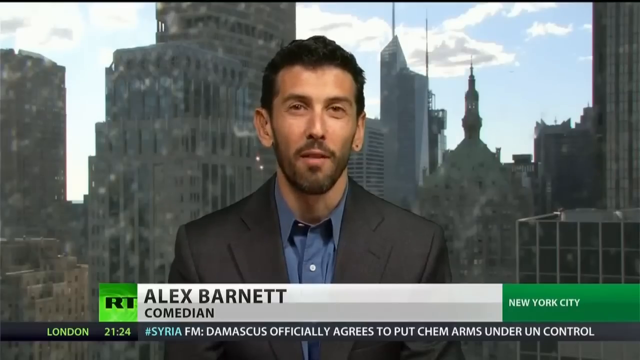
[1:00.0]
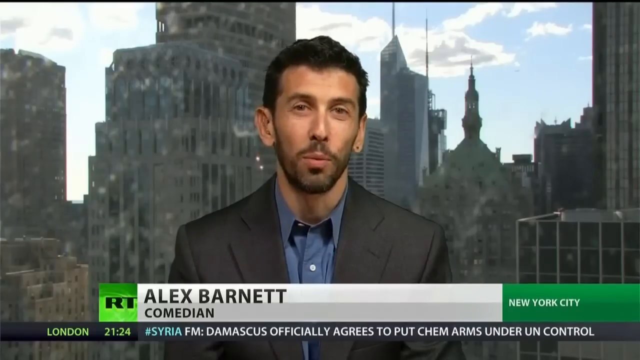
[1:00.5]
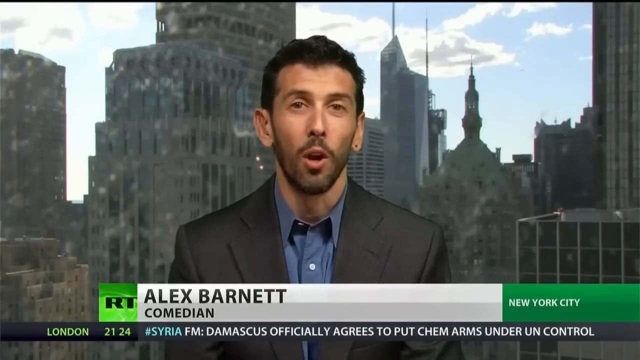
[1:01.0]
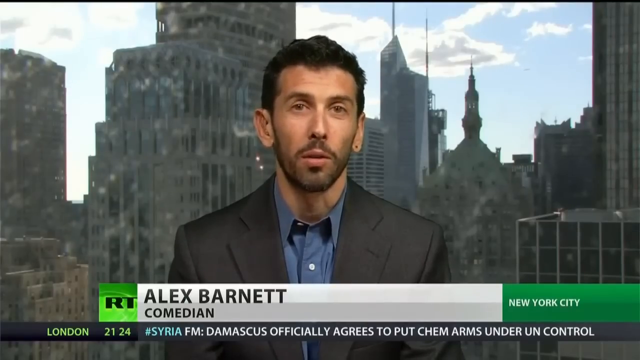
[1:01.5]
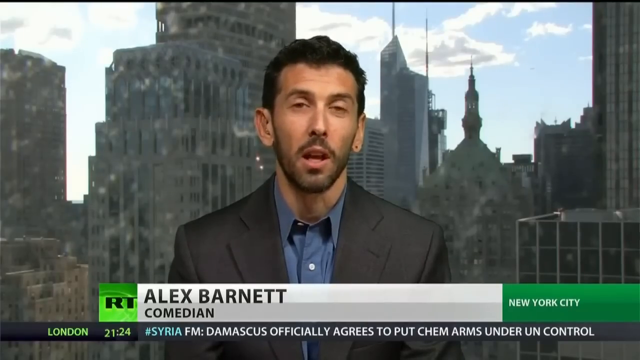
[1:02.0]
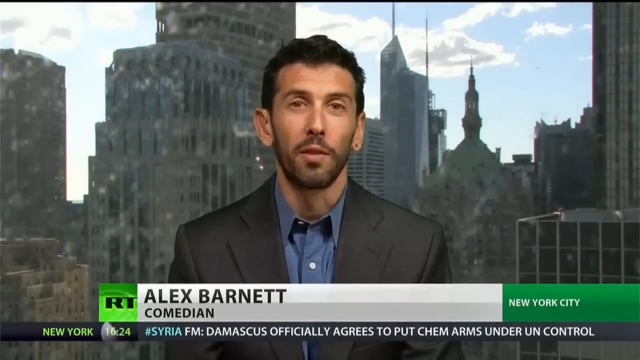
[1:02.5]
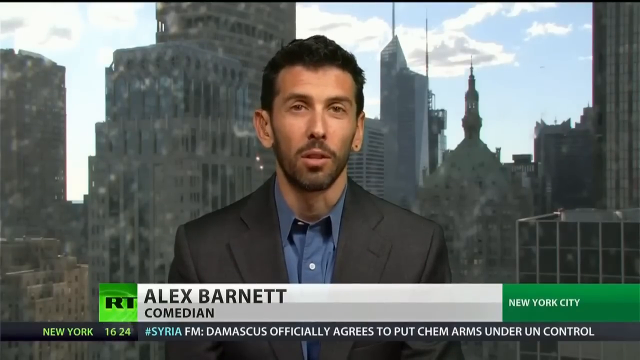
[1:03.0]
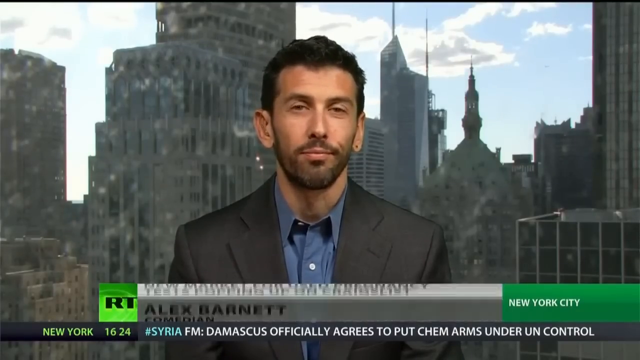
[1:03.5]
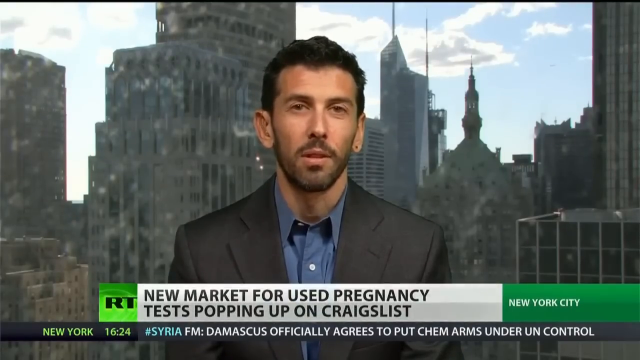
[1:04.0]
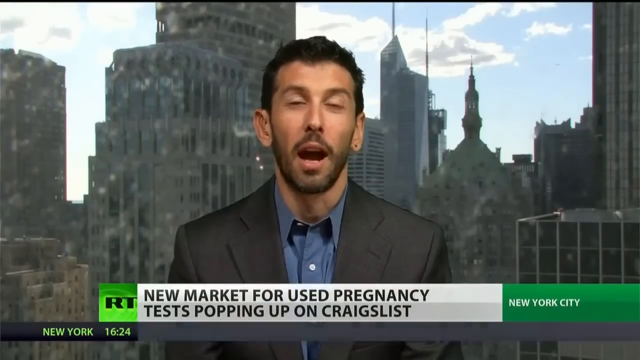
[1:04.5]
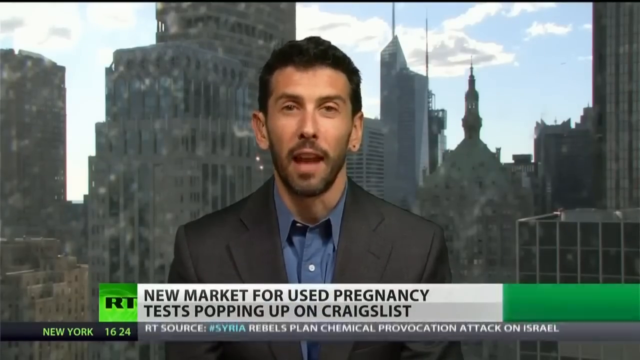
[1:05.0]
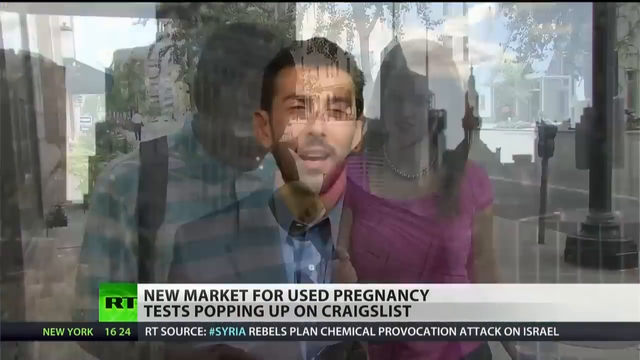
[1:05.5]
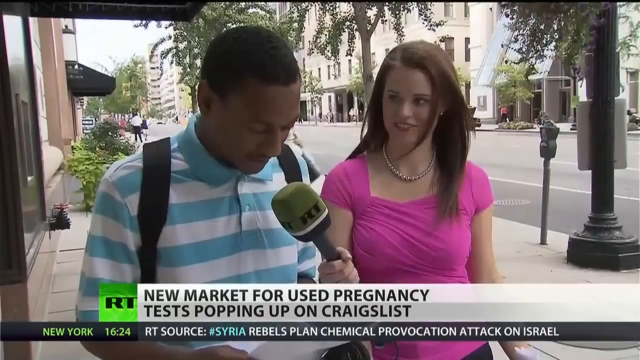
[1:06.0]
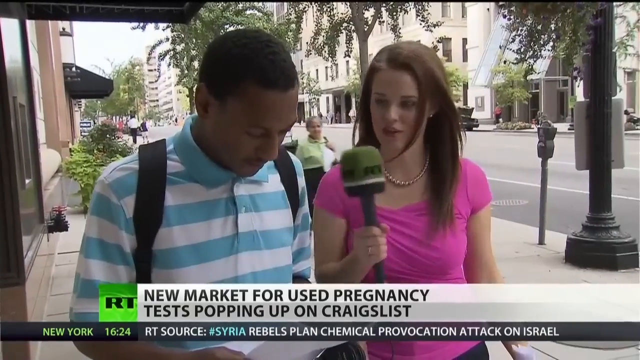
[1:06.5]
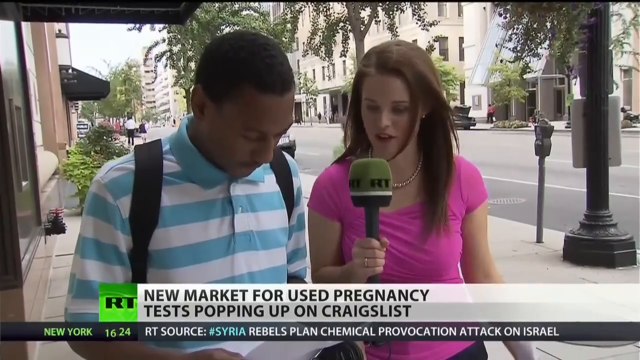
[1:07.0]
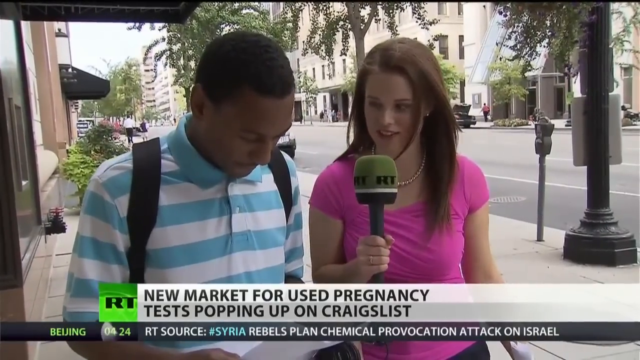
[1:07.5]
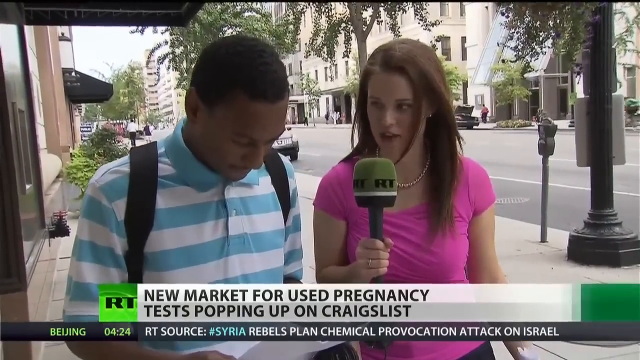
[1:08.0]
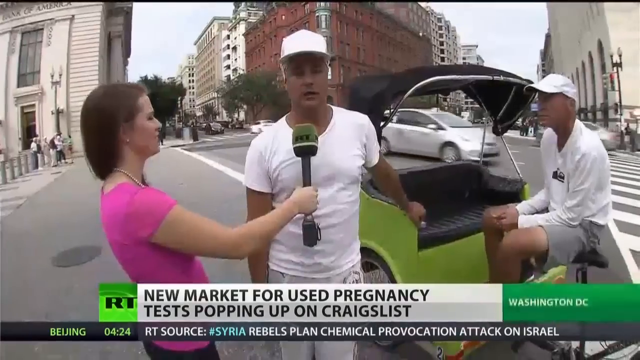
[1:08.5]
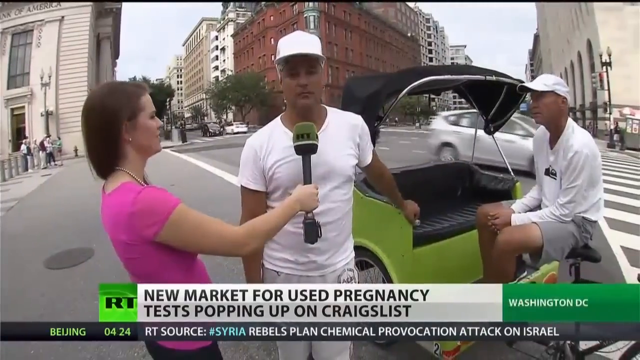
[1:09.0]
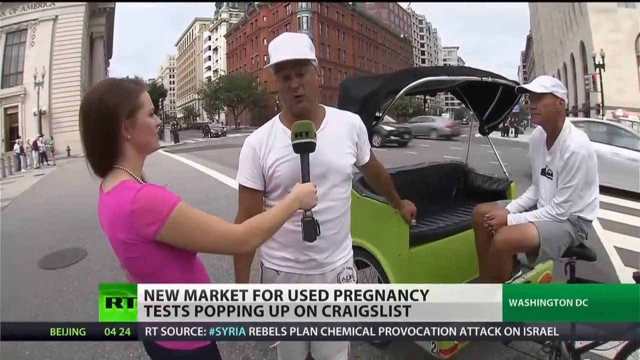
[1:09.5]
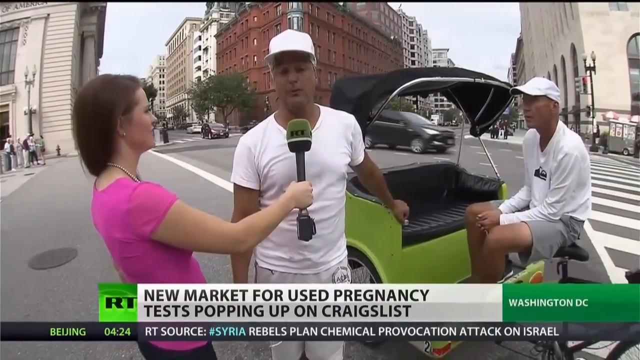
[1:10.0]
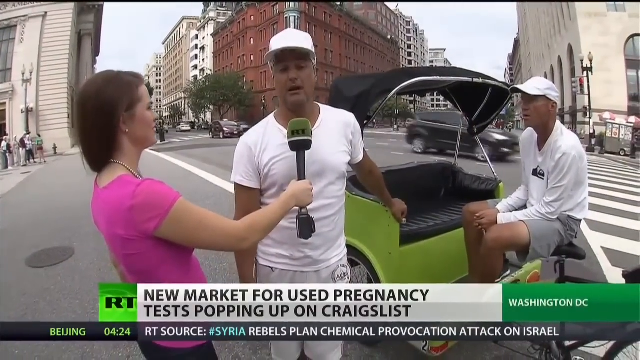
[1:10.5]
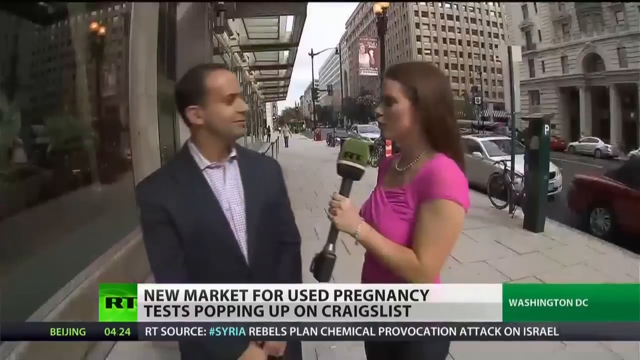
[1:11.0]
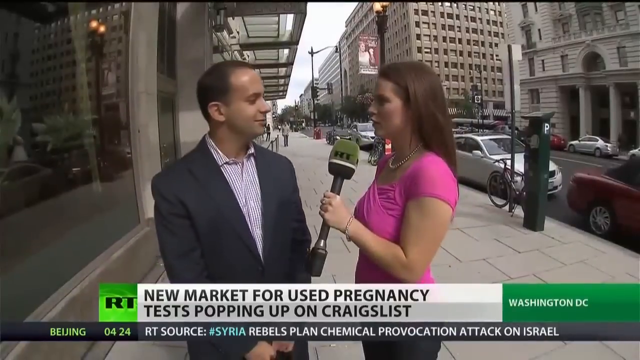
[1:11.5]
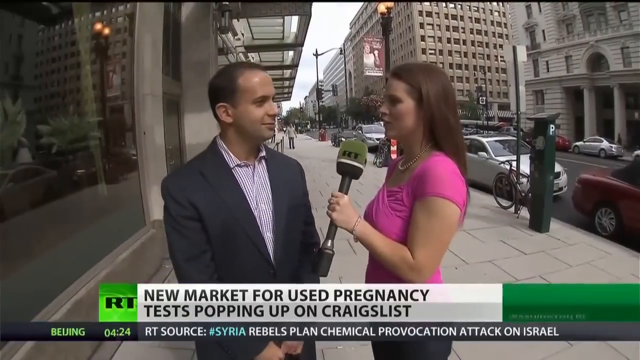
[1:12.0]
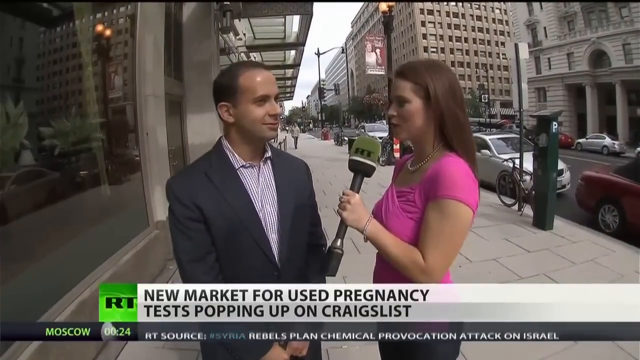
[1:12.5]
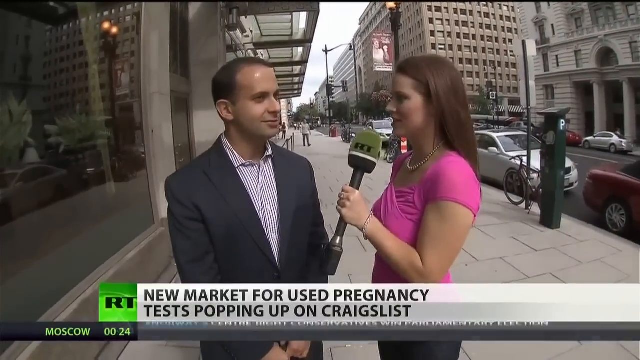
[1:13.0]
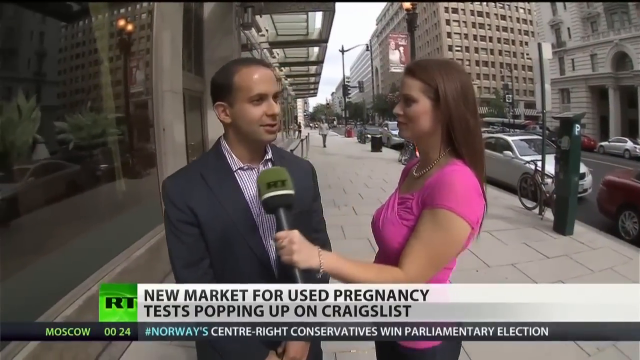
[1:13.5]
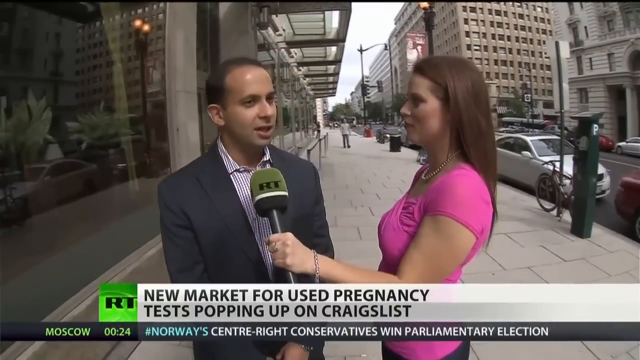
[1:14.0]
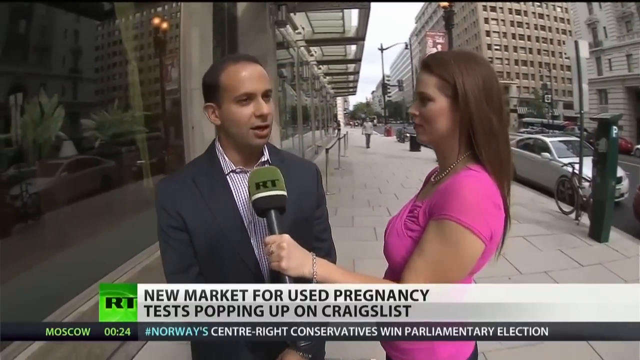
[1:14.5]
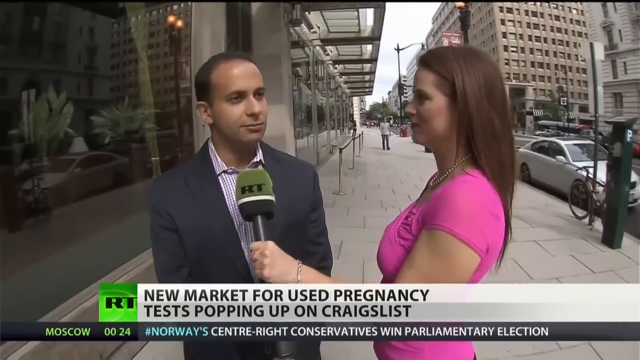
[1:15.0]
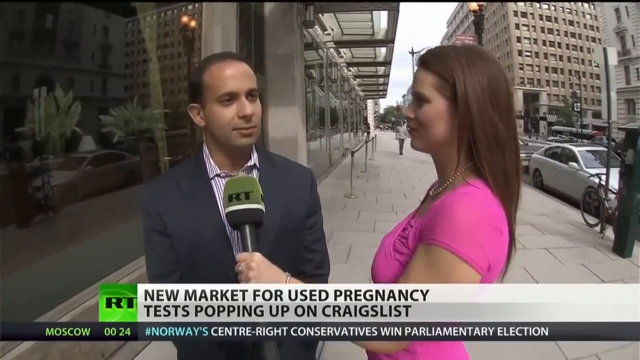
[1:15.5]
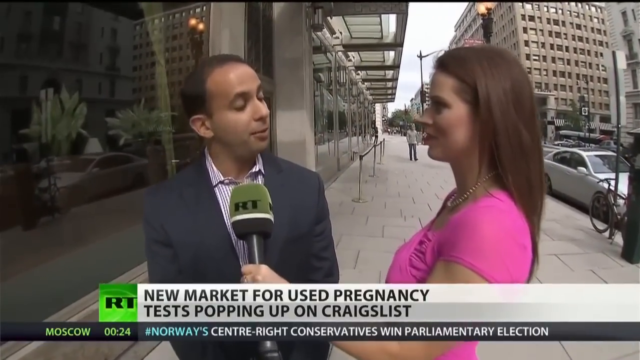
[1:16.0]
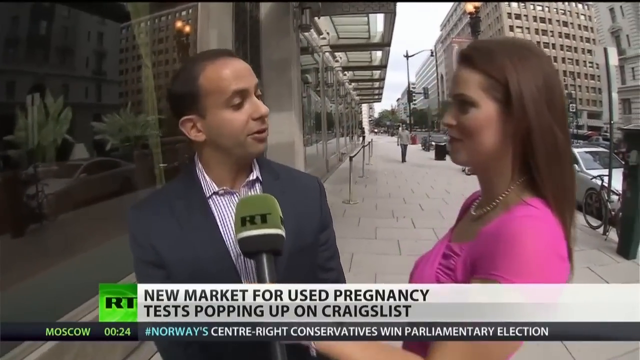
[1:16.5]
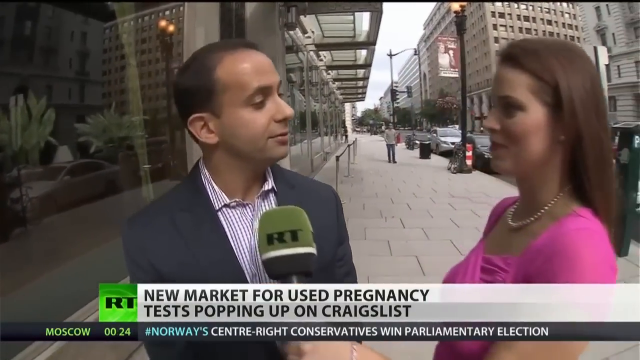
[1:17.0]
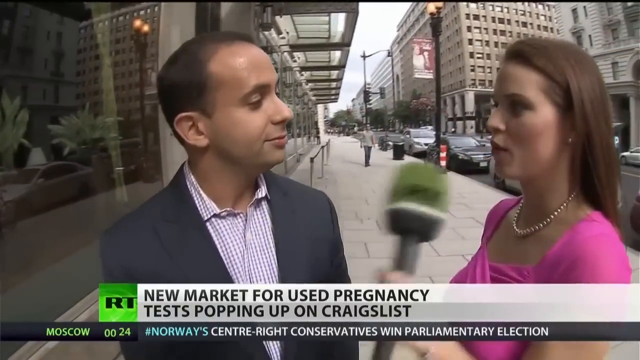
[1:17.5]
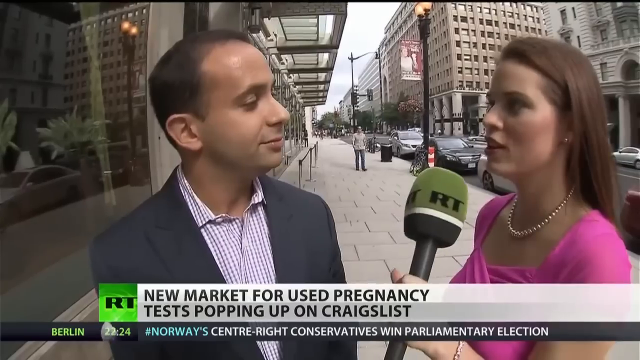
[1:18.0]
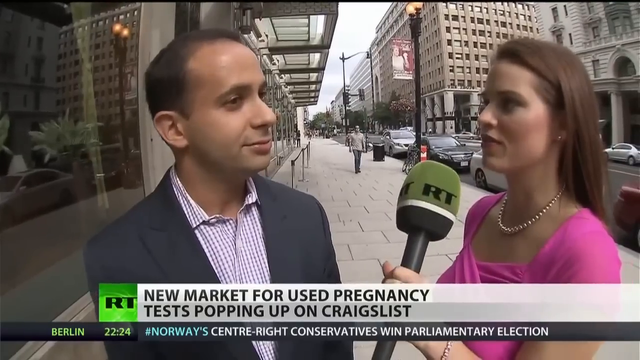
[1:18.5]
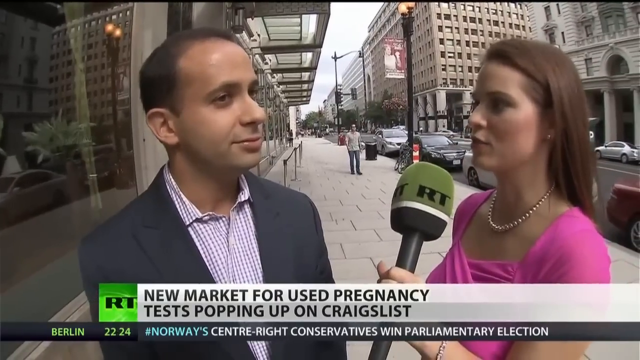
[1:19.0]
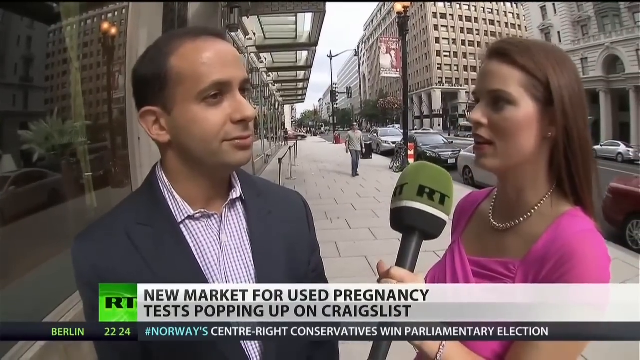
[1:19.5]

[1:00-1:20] A man talks on screen in a news segment. On-screen text identifies him as Alex Barnett, a comedian, with "New York City" to the right. Underneath, the ticker reads "Syria FM. Damascus officially agrees to put" arms "under control." At the far left of the ticker in the bottom left of the screen is the RT logo, with "London 2124" beneath it. As the man talks, the banner flips over to "New market for used pregnancy tests popping up on Craigslist." A reporter in a pink shirt appears on the street on the right, interviewing a man standing to her left in the first photo. In the next photo she stands on the left, holding a microphone in front of the man next to her, with another man to his right, making three people in the scene. She is then seen standing on the side of the street in her pink shirt, on the right, while the man on the left is interviewed, and she puts the microphone in front of him.